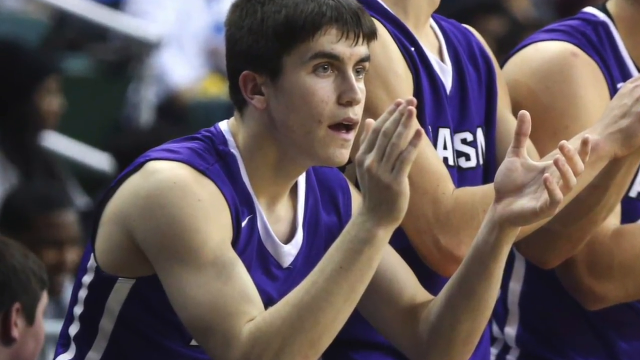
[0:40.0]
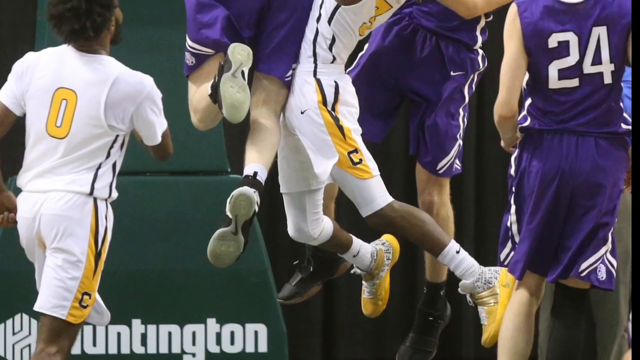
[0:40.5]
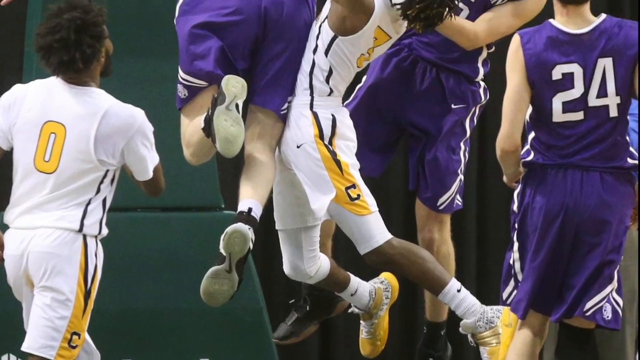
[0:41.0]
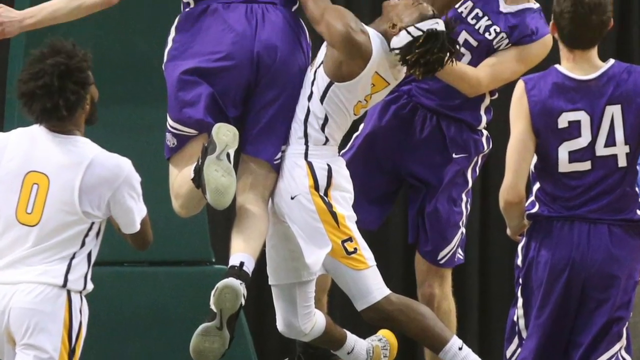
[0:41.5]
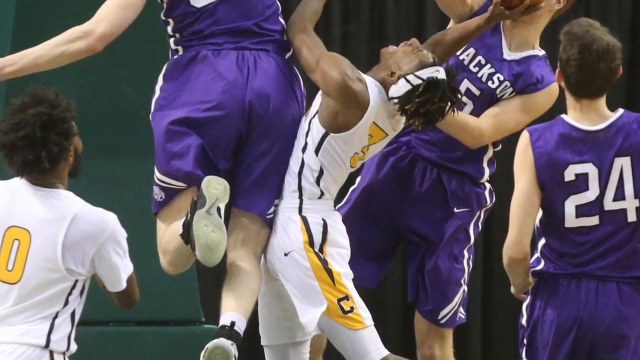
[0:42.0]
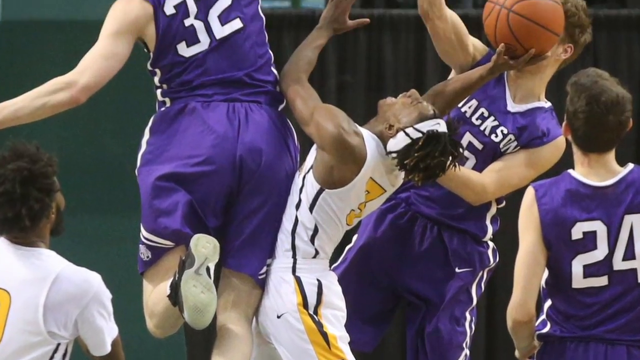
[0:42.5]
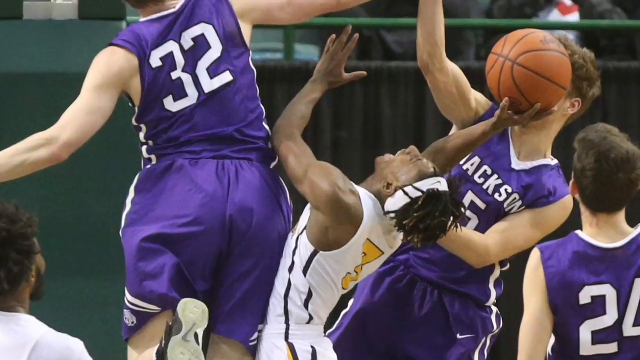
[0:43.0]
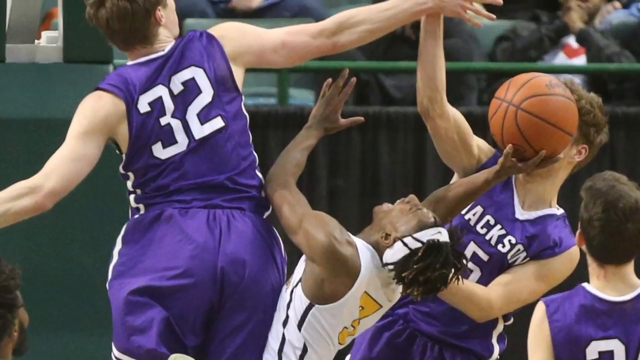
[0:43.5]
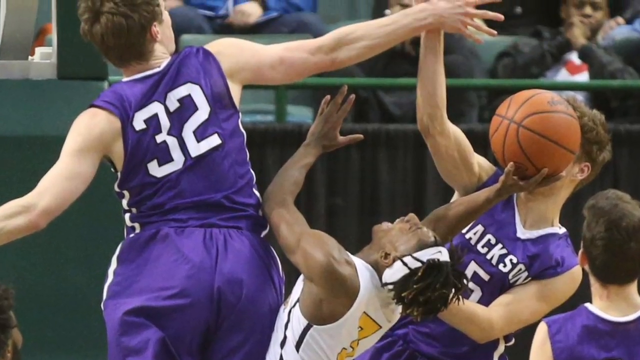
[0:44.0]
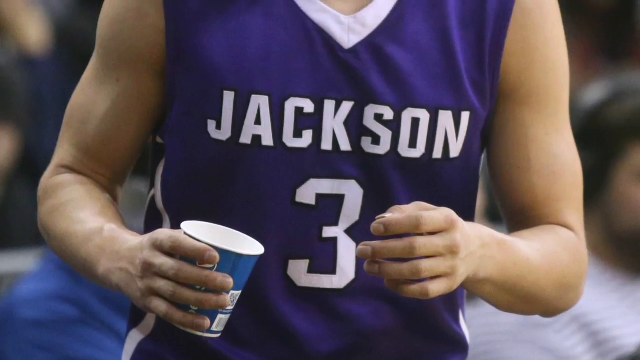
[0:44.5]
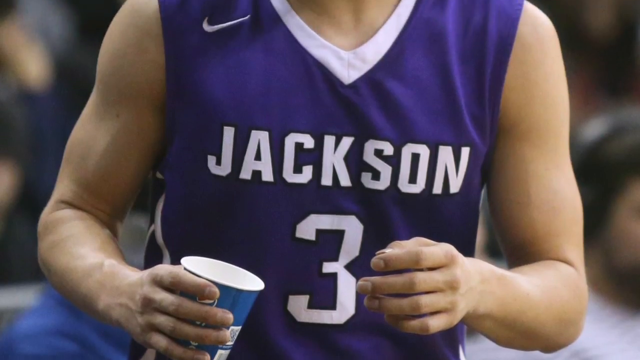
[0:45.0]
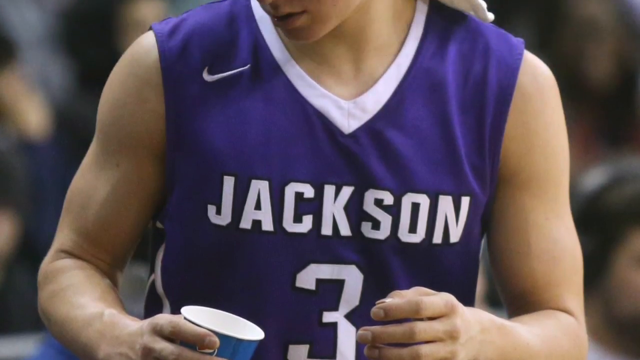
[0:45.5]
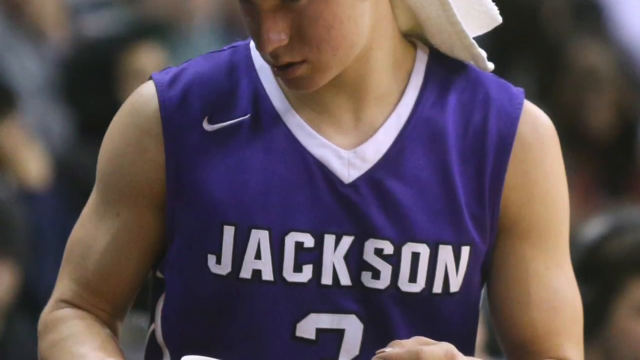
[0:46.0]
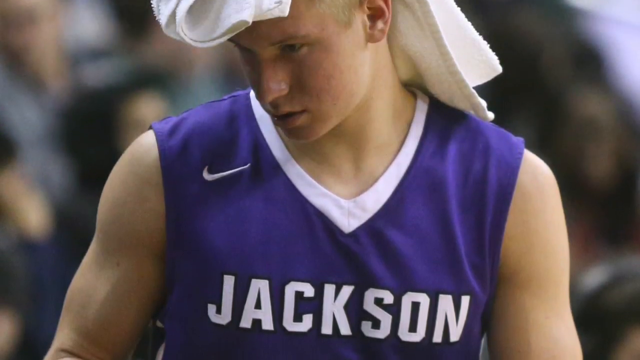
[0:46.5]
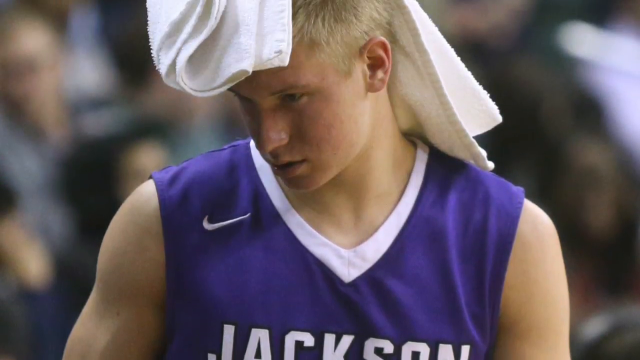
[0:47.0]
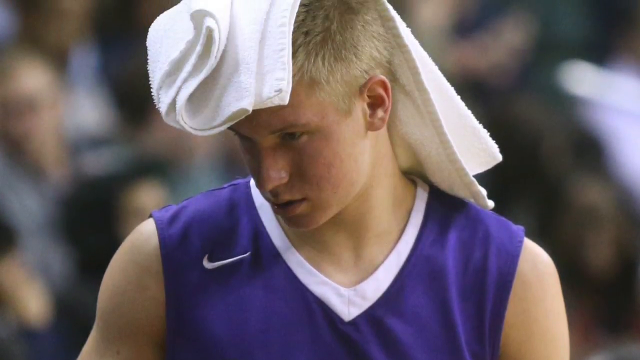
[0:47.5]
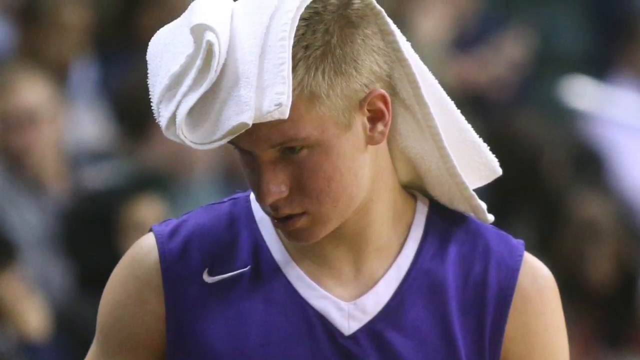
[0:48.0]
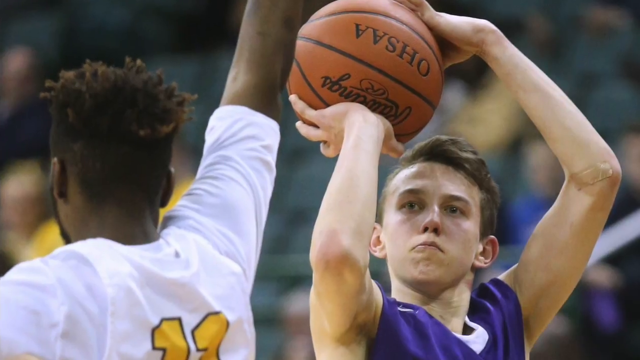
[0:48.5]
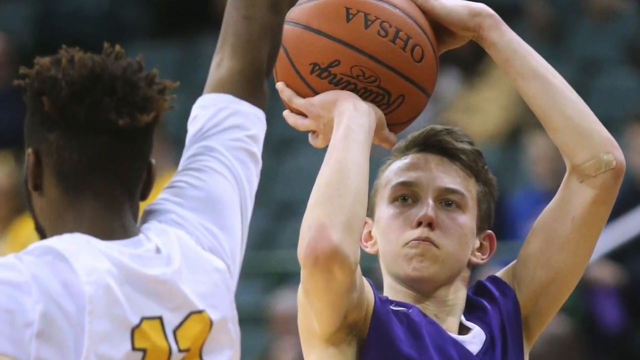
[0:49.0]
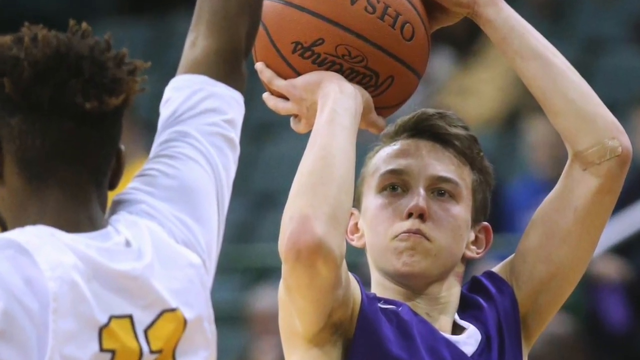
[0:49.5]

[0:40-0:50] A picture shows two players in white, one of whom looks to be going up for a shot, guarded by three Jackson players in purple. Number 32 has his back to the camera, mid-leap with his right arm out. Another player right next to the shooter has his arm up, and the shooter looks like he is being fouled as he is about to shoot the ball with his right hand. Next, Jackson's number 3 holds a cup with a towel over his head against a blurry background. Then another Jackson player is shooting, and the basketball says "OHSAA" on it.